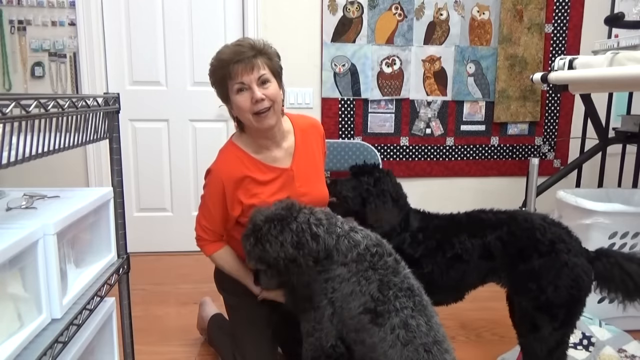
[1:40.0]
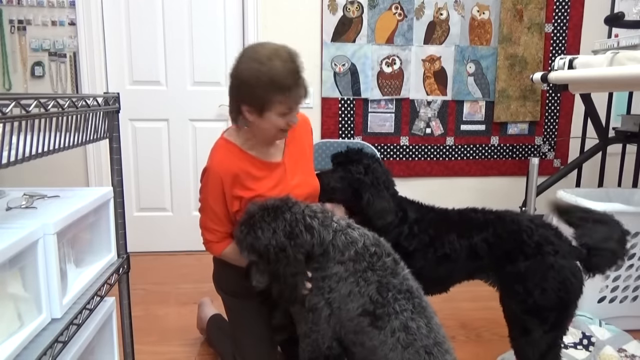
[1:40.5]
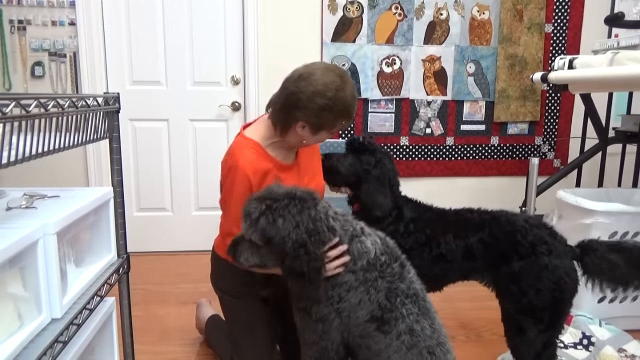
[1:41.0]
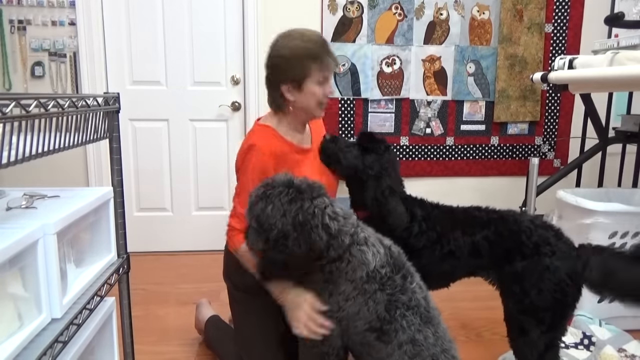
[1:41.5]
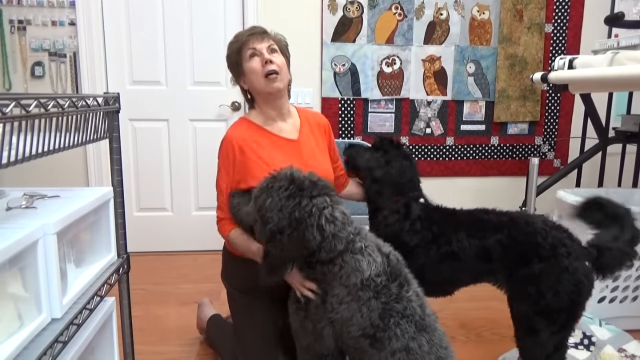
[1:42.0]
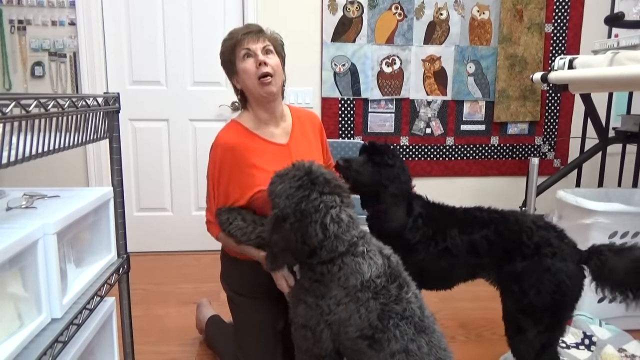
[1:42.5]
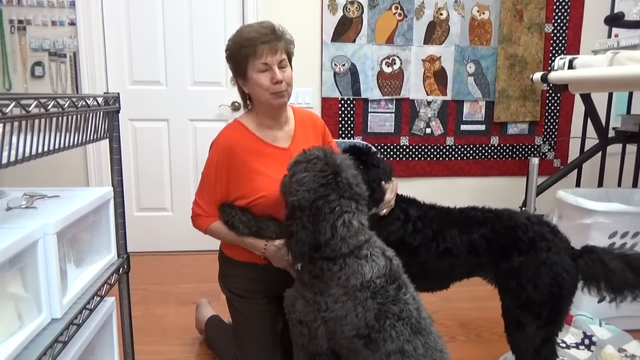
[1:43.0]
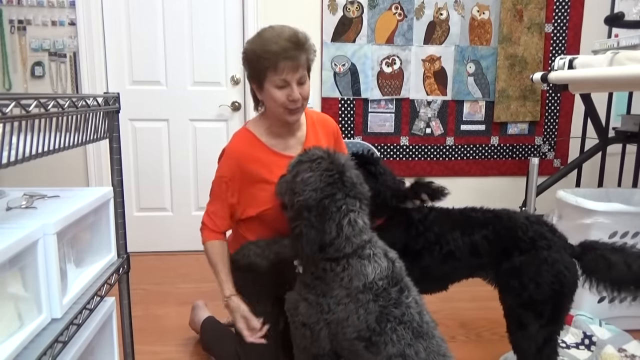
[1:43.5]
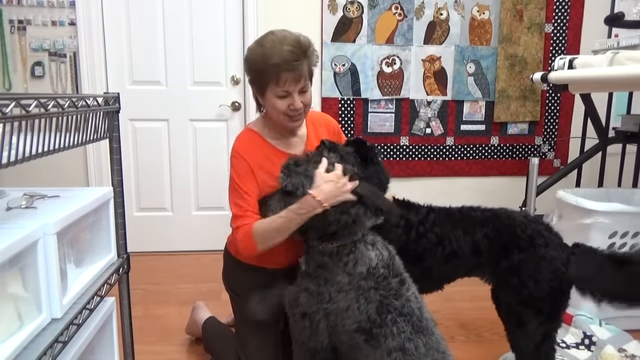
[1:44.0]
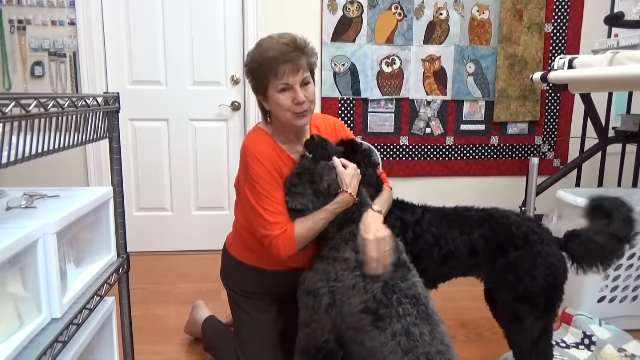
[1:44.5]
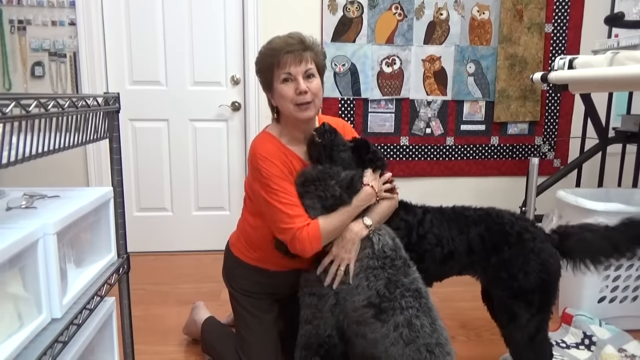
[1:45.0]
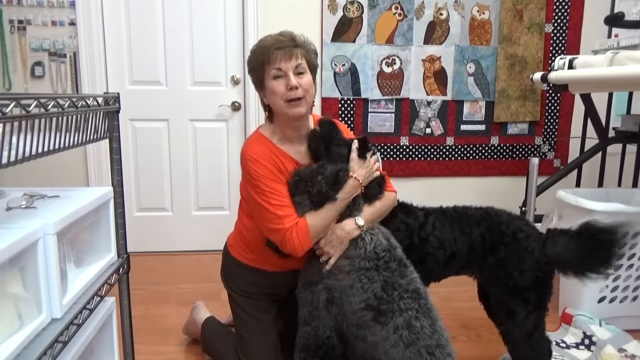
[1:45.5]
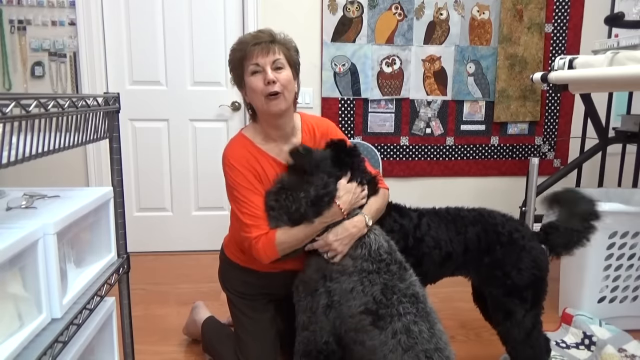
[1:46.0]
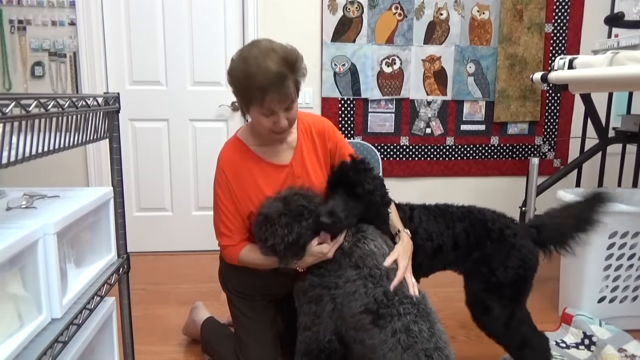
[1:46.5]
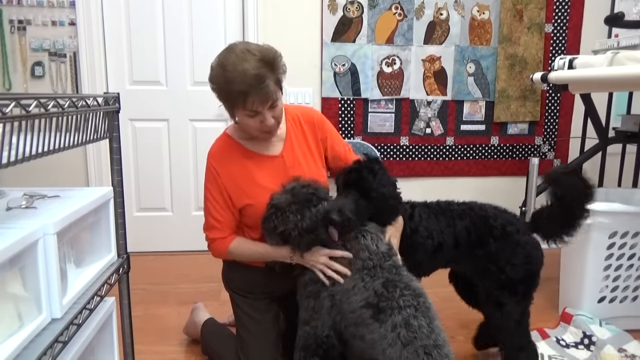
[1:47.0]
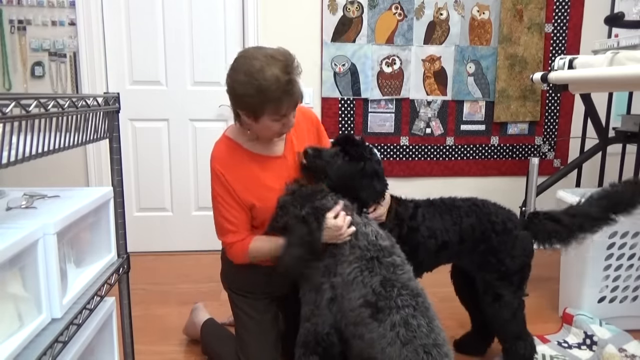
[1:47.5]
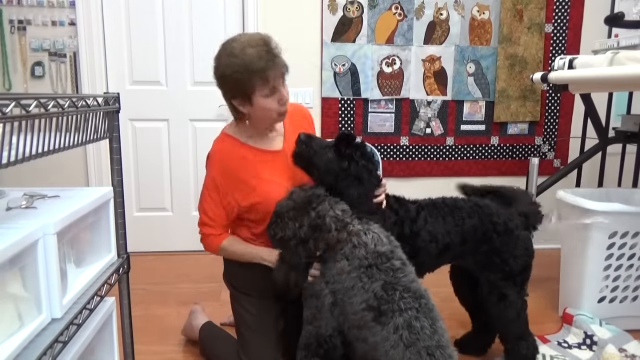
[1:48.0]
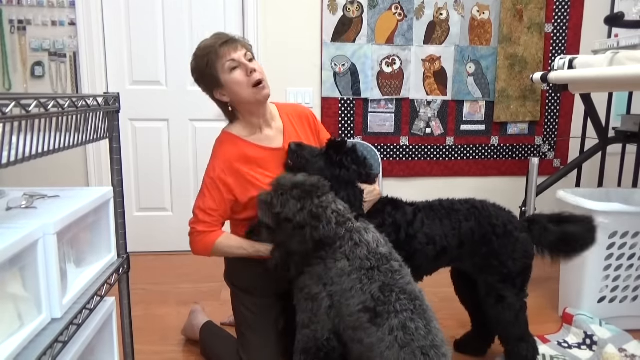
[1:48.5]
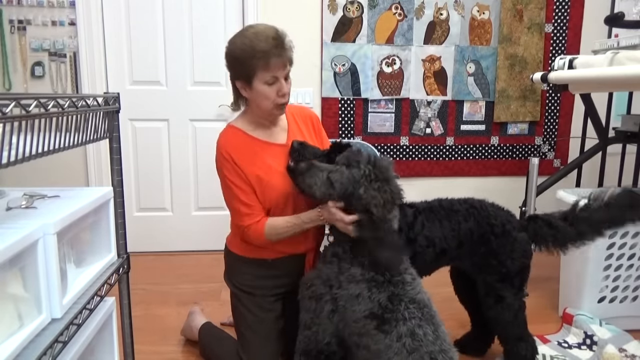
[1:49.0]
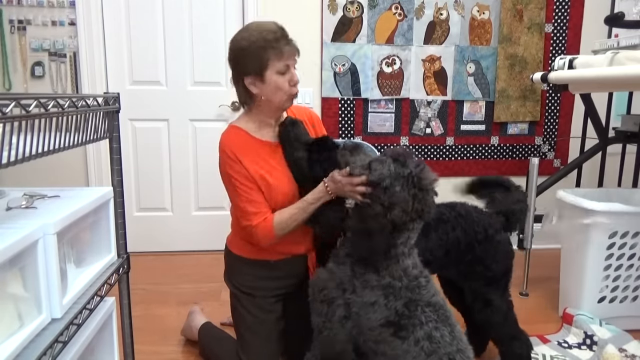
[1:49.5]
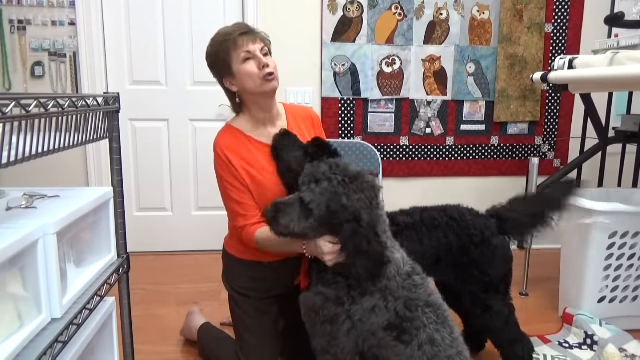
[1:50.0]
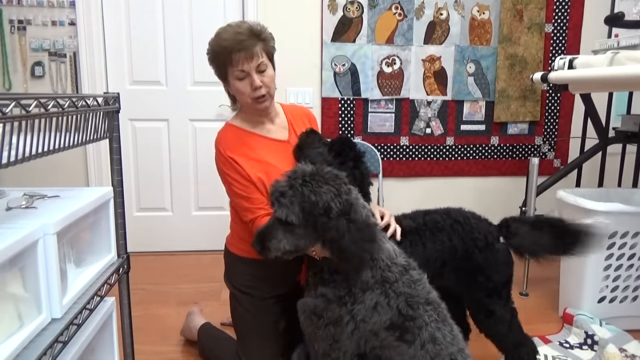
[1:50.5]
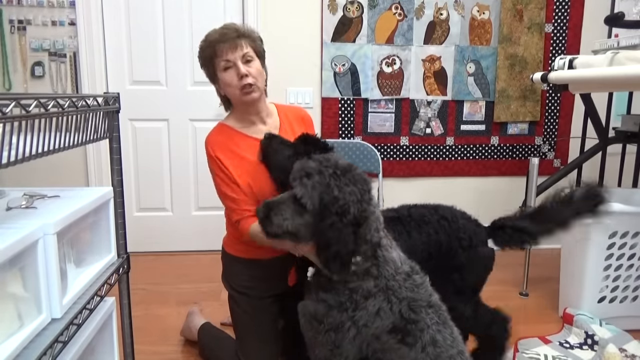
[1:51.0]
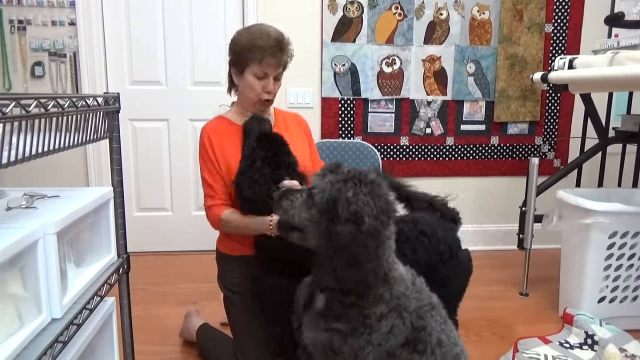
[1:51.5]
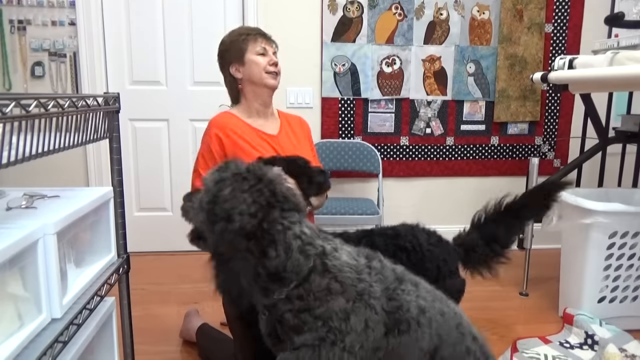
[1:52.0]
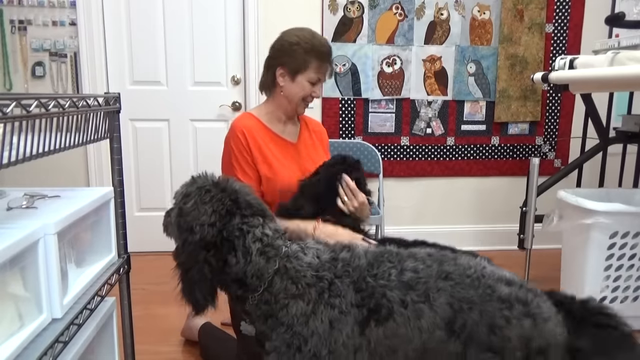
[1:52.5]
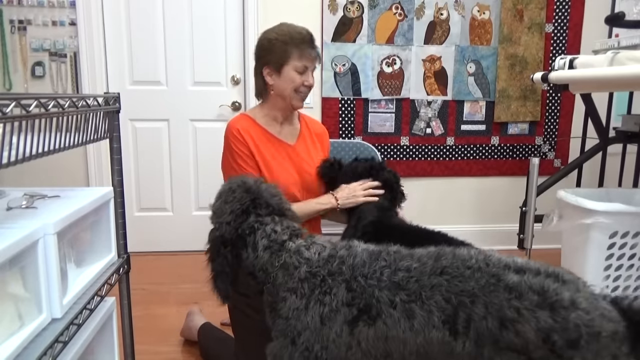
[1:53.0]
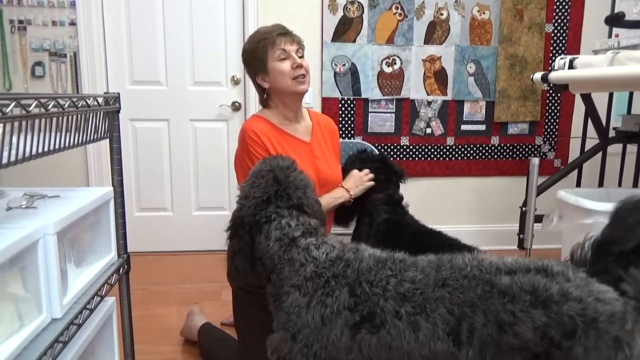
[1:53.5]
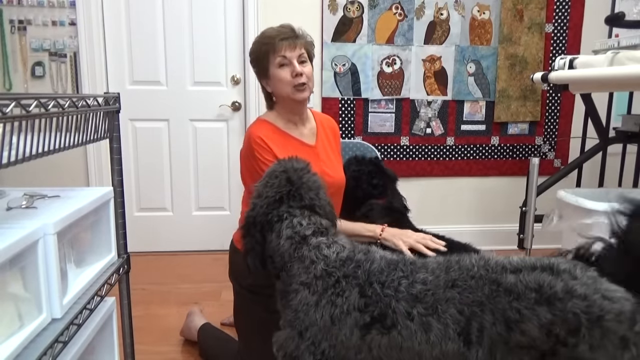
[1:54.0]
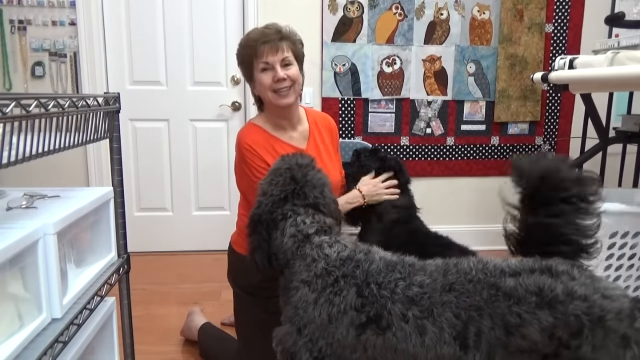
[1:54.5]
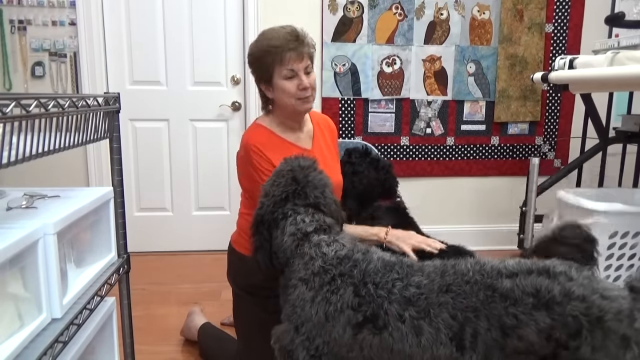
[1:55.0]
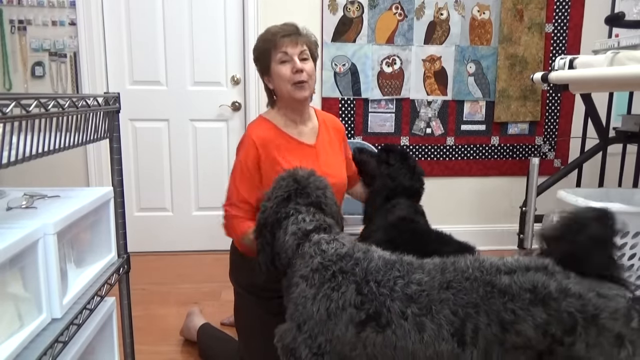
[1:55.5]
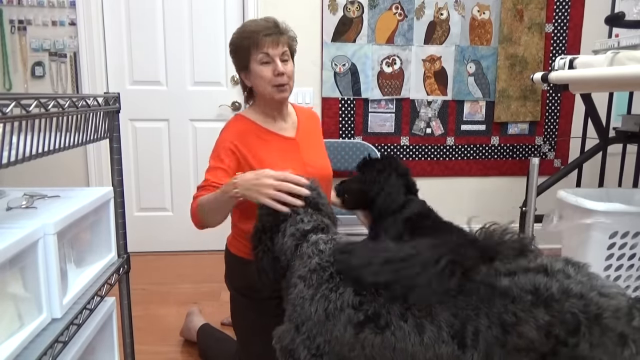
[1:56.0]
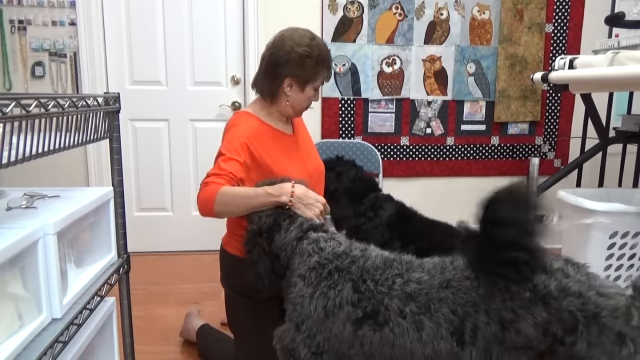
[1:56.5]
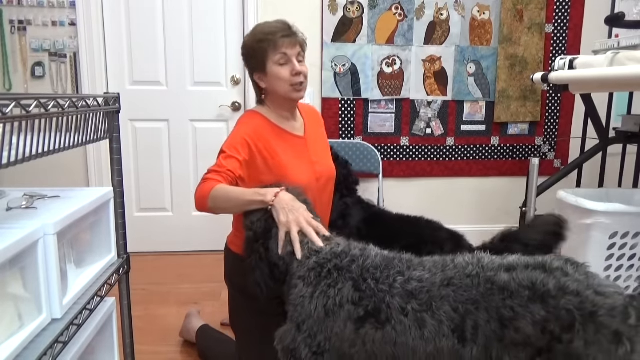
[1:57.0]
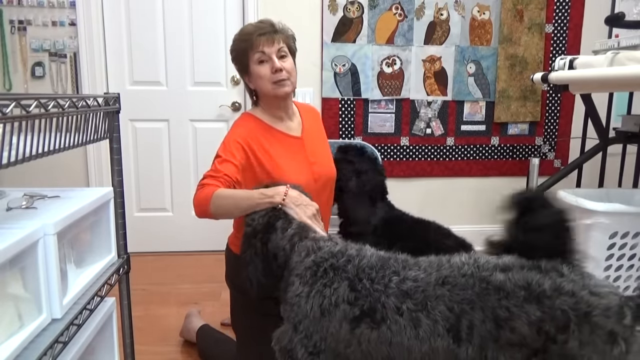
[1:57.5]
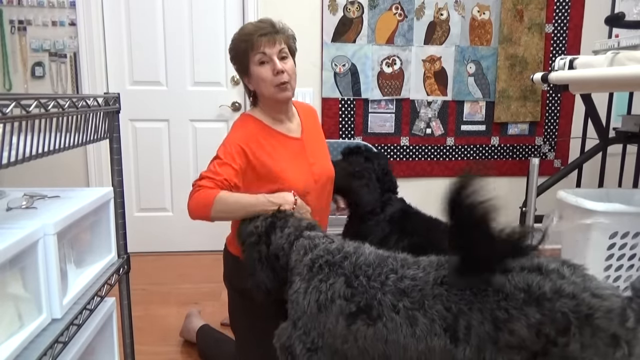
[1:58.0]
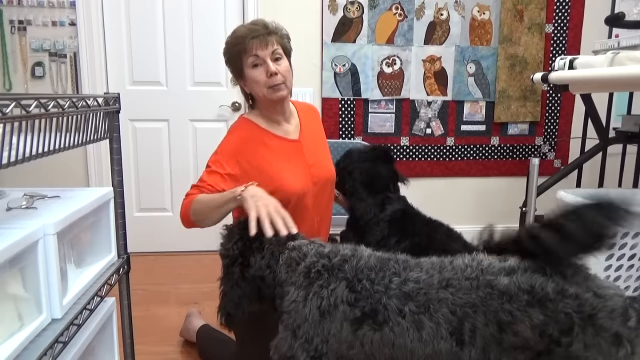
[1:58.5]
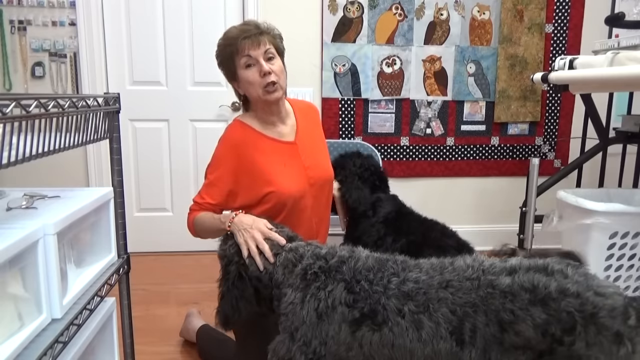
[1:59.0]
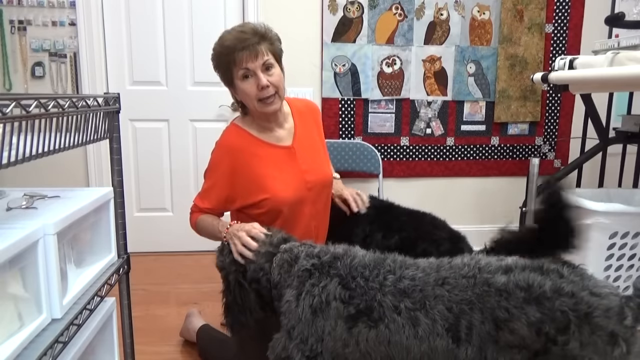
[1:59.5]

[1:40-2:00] The woman has her left hand around the black dog and her right hand around the lighter lab. She starts rubbing only the black lab, then rubs the lighter one at the same time. Both labs look very friendly; they try to kiss and lick her and seem to be wagging their tails. She is possibly giving some type of review of the dogs. The dogs seem very healthy, neither overweight nor malnourished.